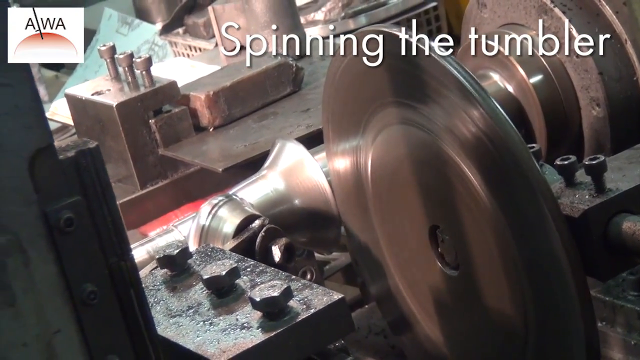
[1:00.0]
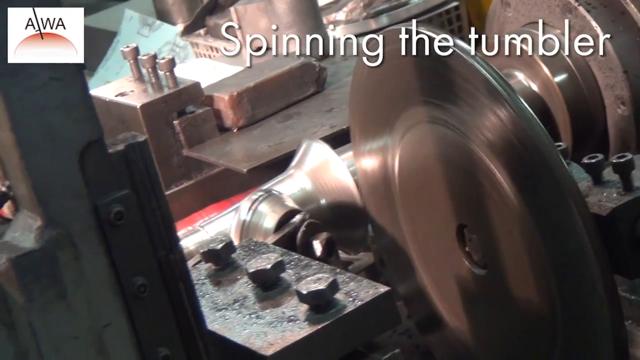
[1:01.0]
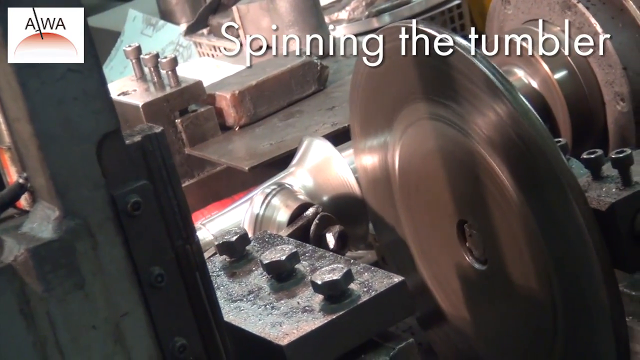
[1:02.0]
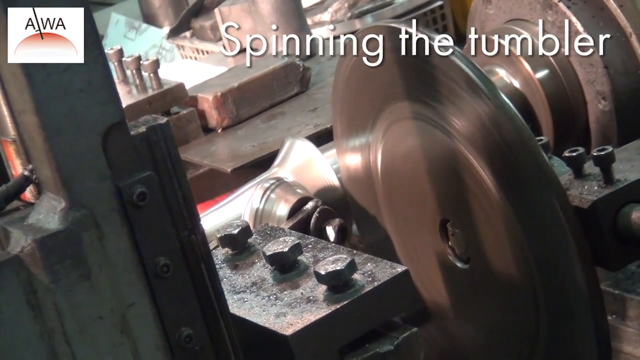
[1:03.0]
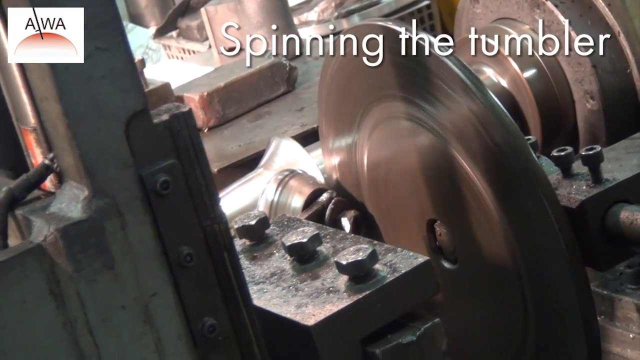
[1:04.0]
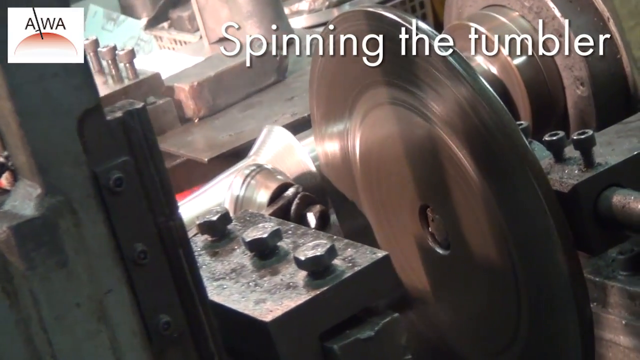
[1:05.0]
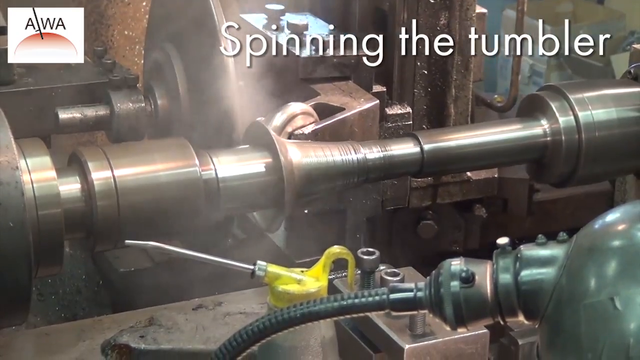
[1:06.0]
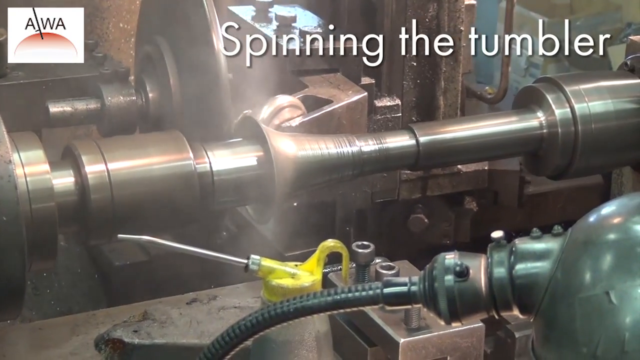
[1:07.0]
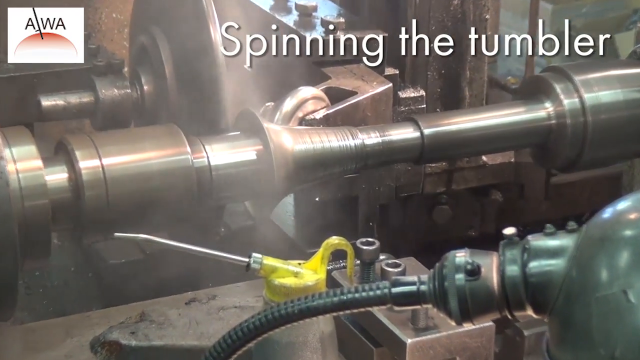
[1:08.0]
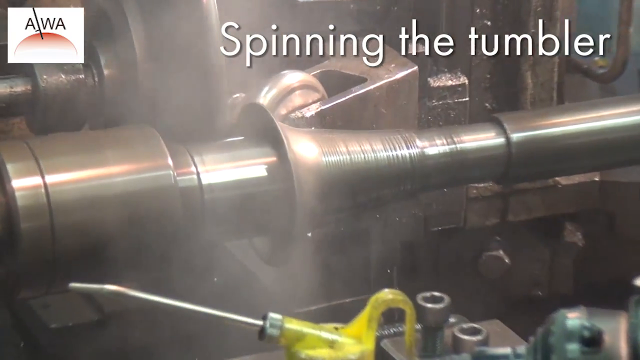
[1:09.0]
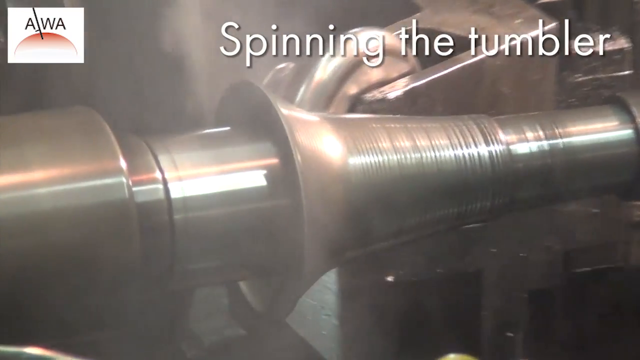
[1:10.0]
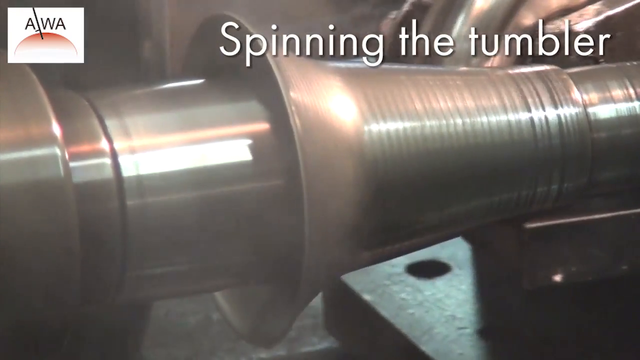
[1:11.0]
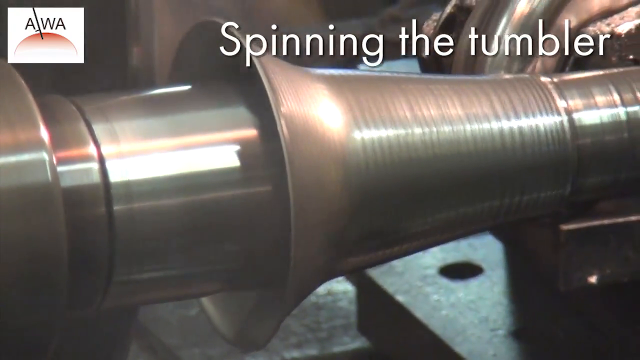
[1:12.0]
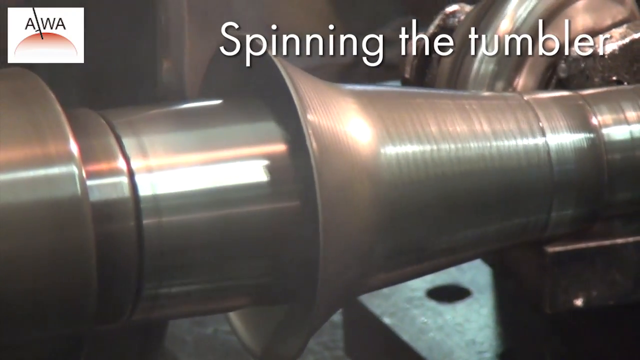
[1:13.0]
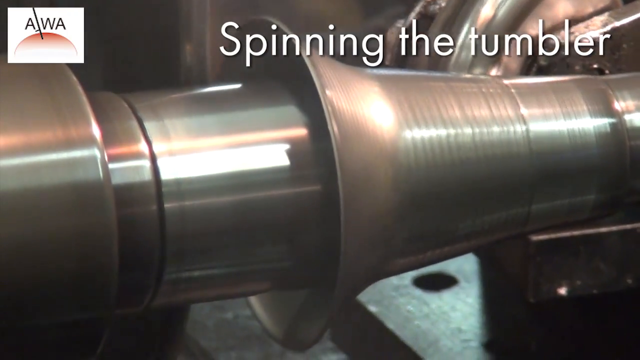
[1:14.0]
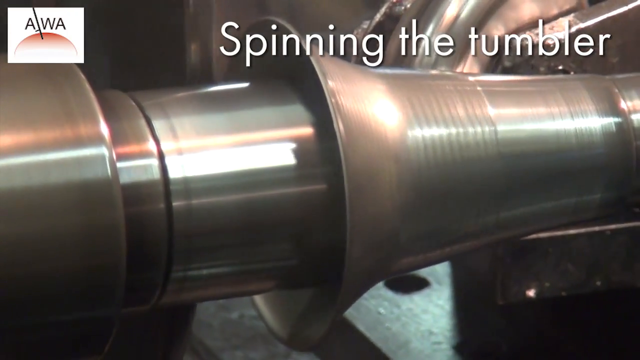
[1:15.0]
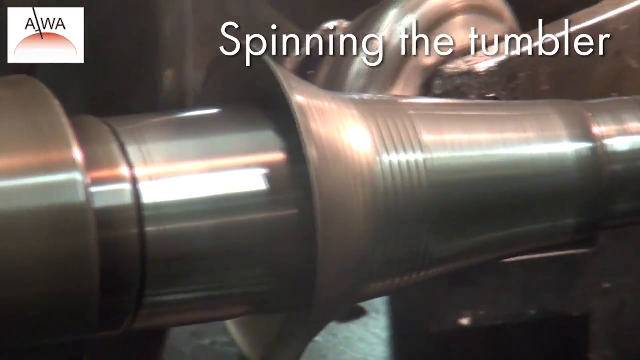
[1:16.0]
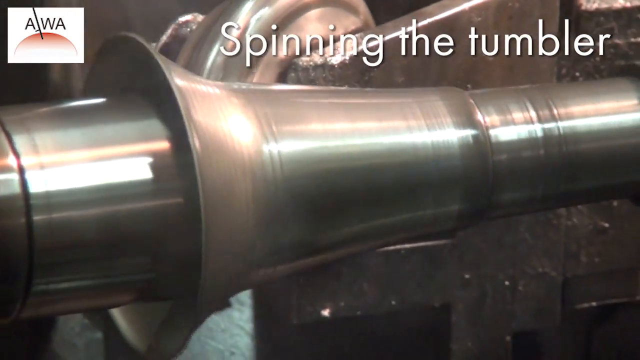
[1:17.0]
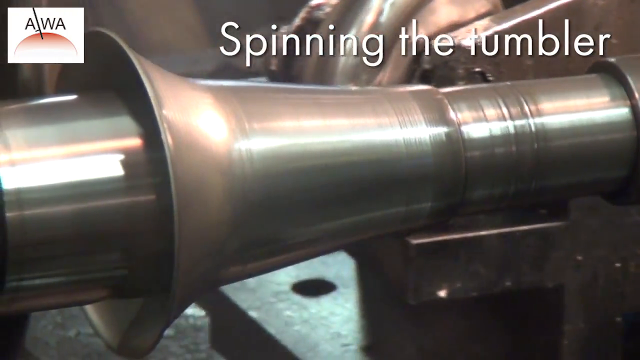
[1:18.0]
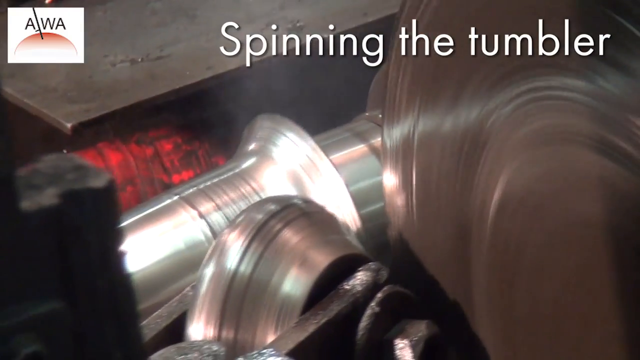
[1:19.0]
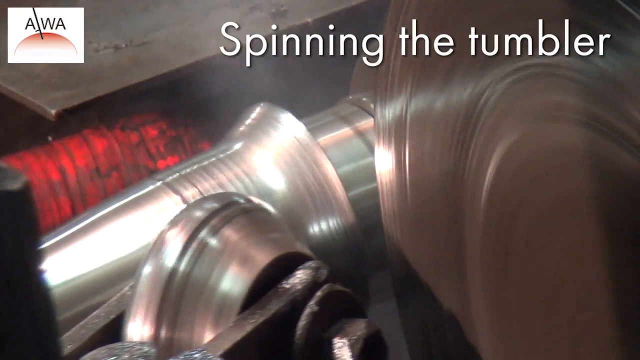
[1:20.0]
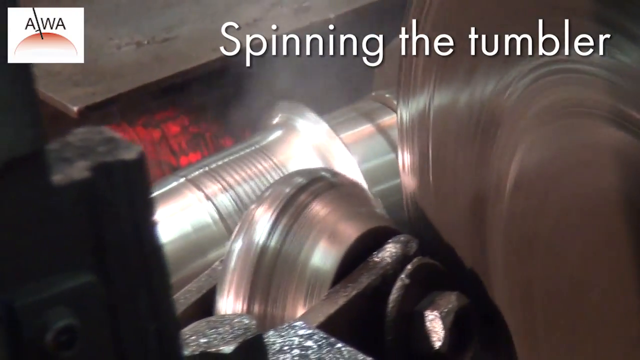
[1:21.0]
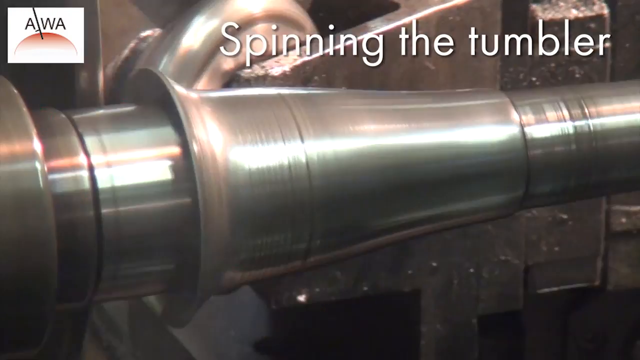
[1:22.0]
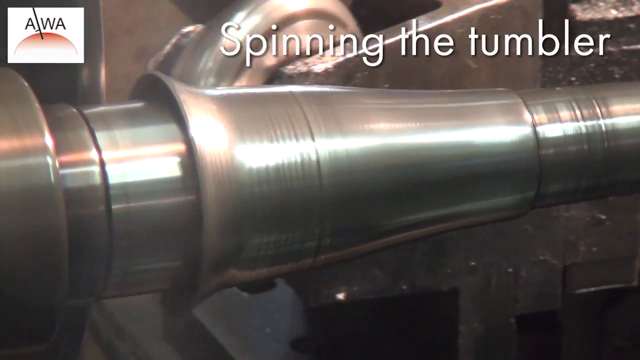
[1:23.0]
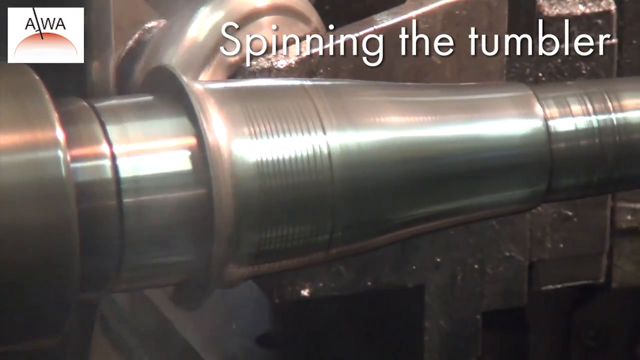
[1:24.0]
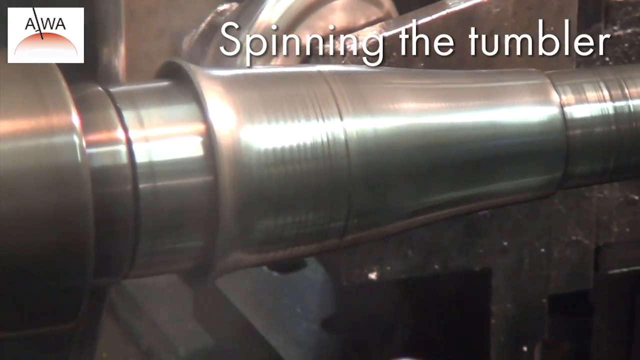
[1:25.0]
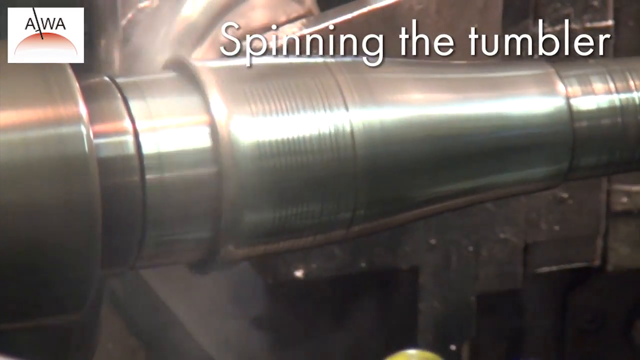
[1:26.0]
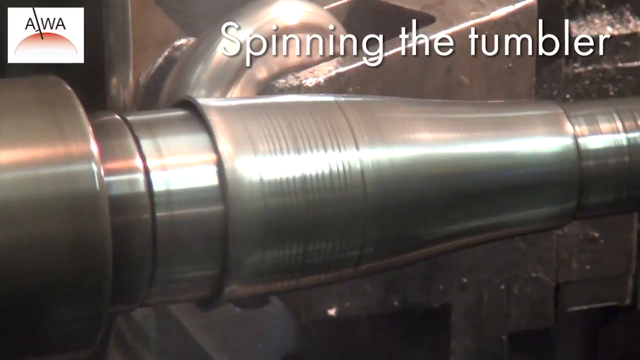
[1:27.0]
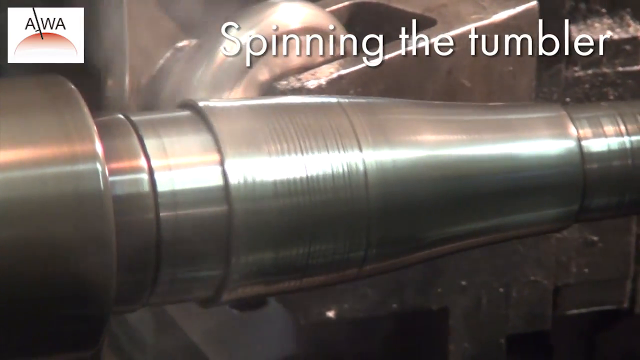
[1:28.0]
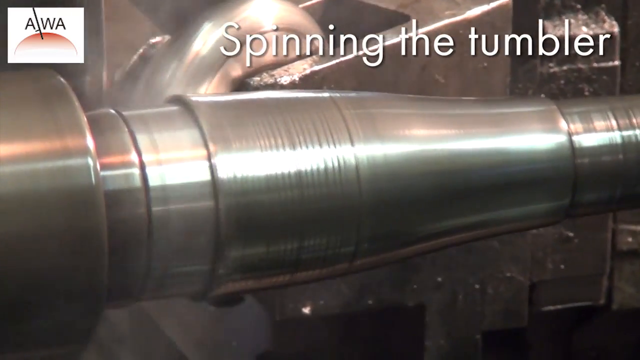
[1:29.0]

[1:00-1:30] A spinning wheel adjusts a silver disc in a factory. Another shot shows a smaller wheel that keeps going back and forth, touching the edges of the disc; each time it touches the edge, the metal ripples upward and covers the surface of the disc, which is becoming long and narrow, vase- or tumbler-shaped. As the smaller disc keeps moving, the shape becomes narrower and longer. White light reflects on the side, very shiny, from a very bright light source probably somewhere above. Some of the machinery looks dull, old and rusty and some looks newer and shiny. Steam pours in front of the machinery, looking like air. A close-up shows the disc hitting the tumbler, which is kind of silvery bronze in color. The text "spinning the tumbler" appears in white in the top right corner of the screen with a black shadow behind it, completely stationary. In the top left corner is a white rectangle with the letters "AWA" in black, all caps, and a logo that appears to be a red semicircle with a red gradient and a black stem attached to the top, like an apple.